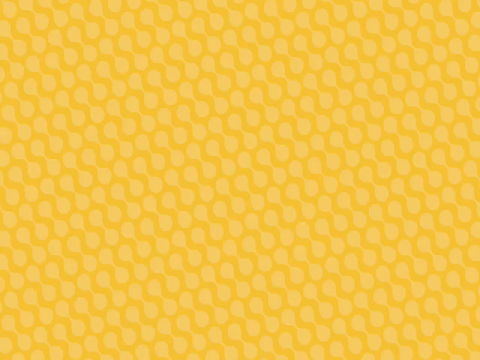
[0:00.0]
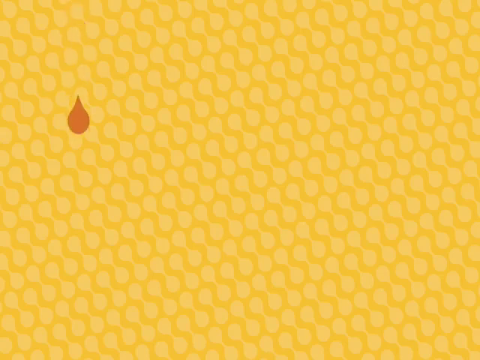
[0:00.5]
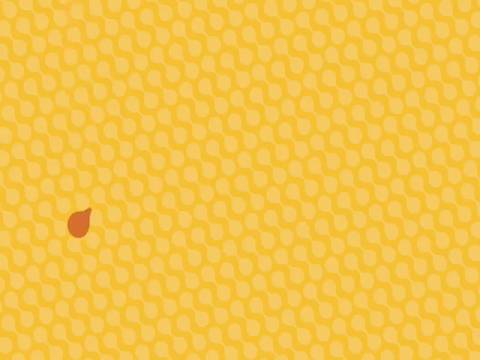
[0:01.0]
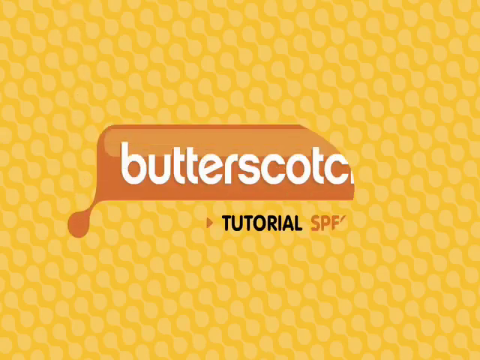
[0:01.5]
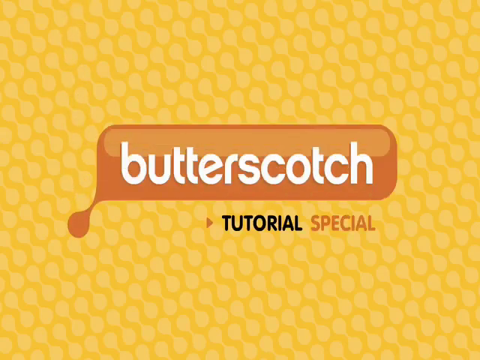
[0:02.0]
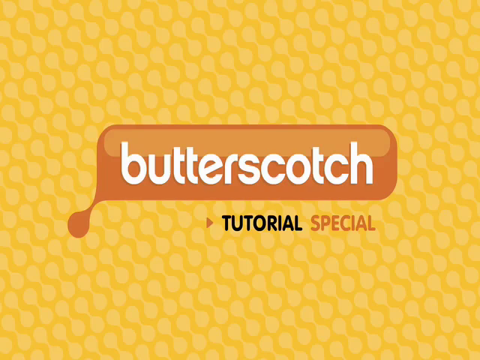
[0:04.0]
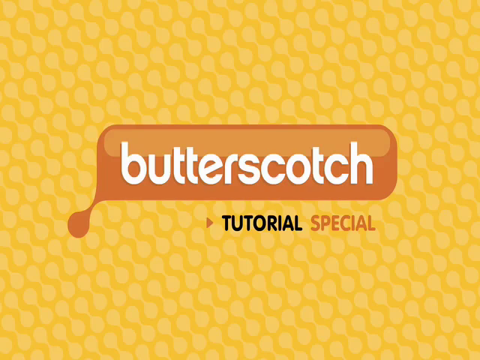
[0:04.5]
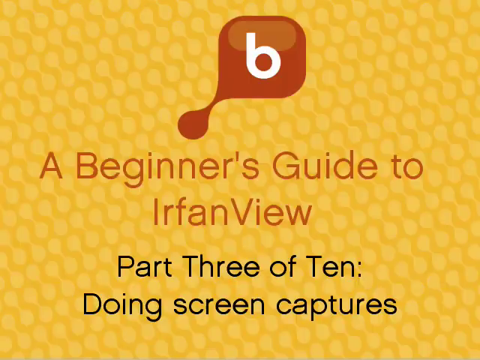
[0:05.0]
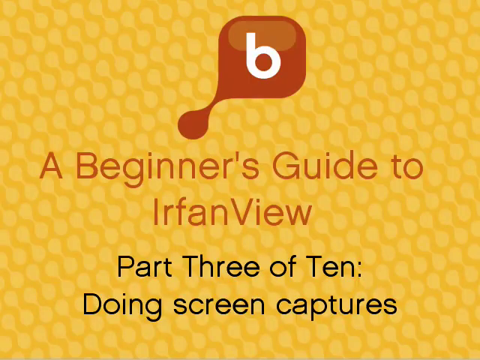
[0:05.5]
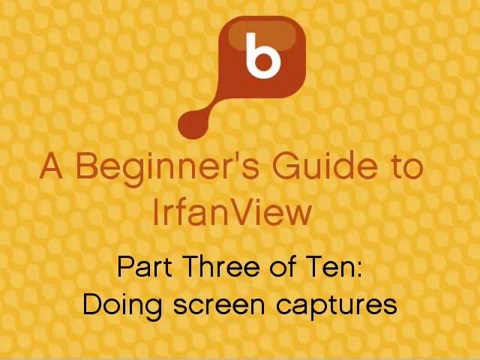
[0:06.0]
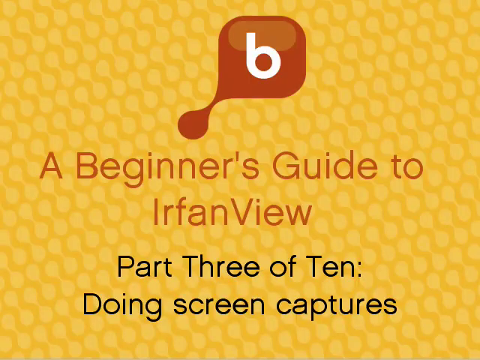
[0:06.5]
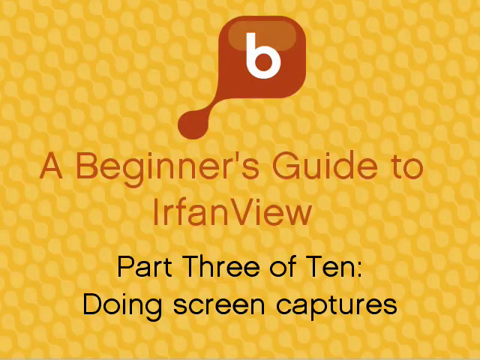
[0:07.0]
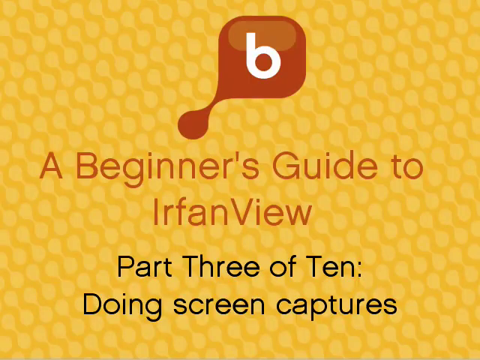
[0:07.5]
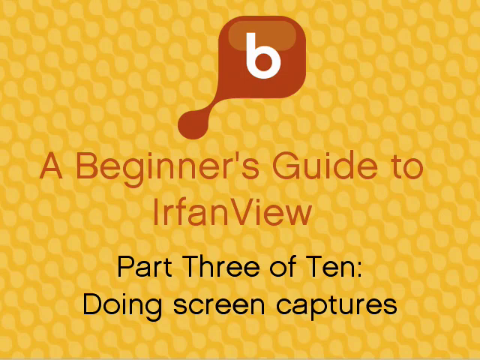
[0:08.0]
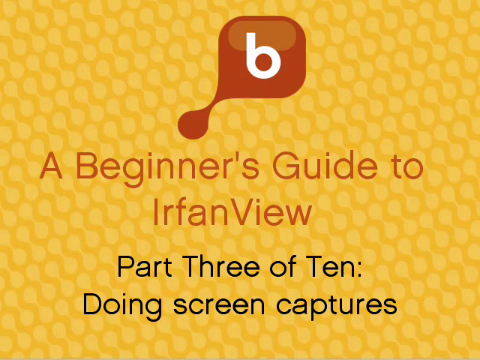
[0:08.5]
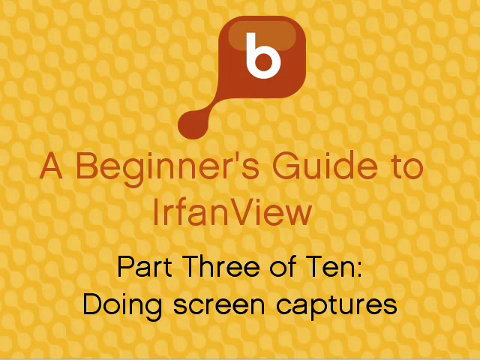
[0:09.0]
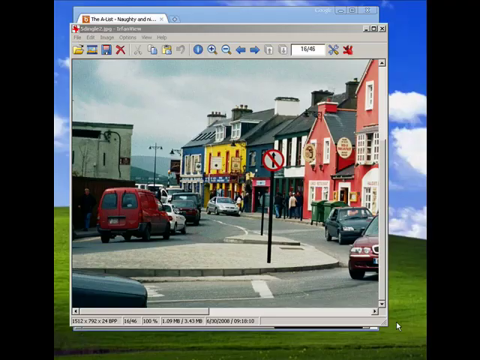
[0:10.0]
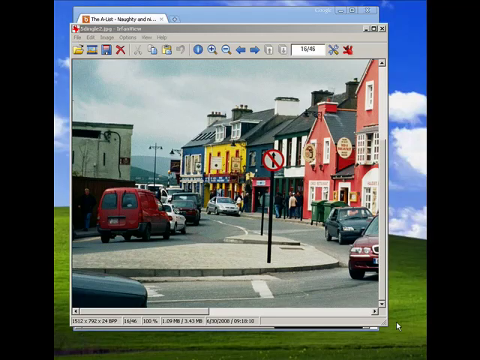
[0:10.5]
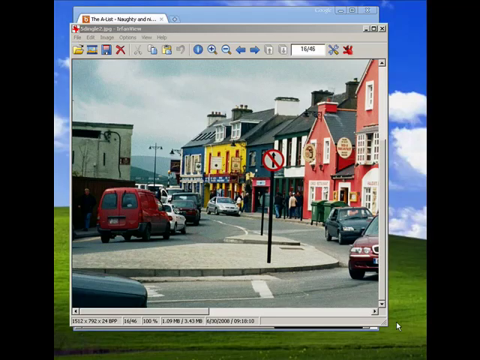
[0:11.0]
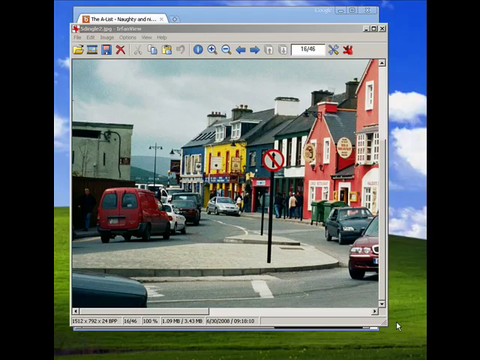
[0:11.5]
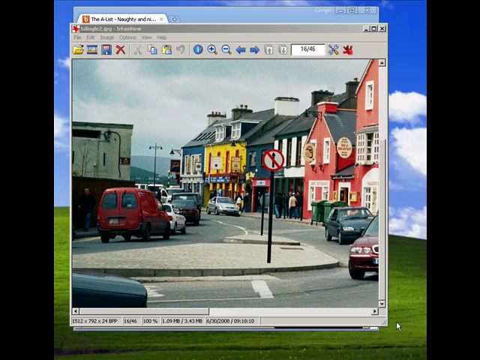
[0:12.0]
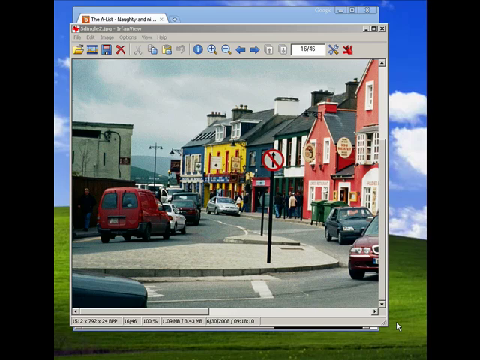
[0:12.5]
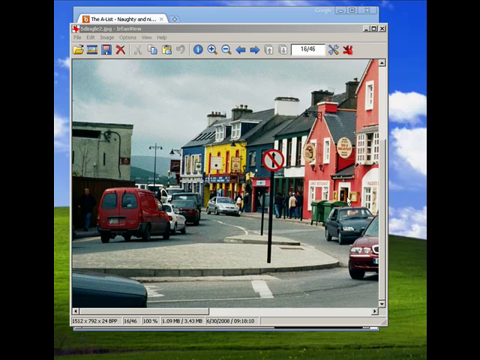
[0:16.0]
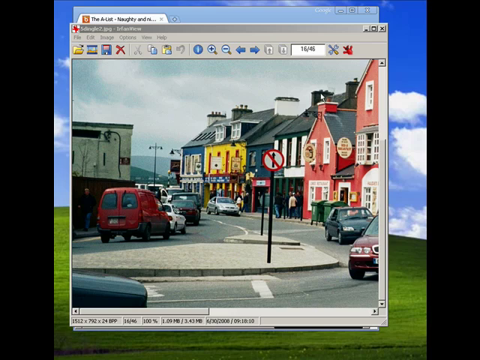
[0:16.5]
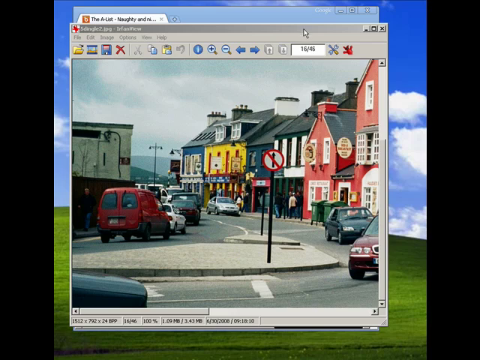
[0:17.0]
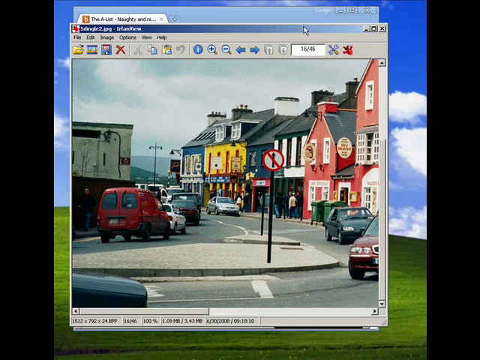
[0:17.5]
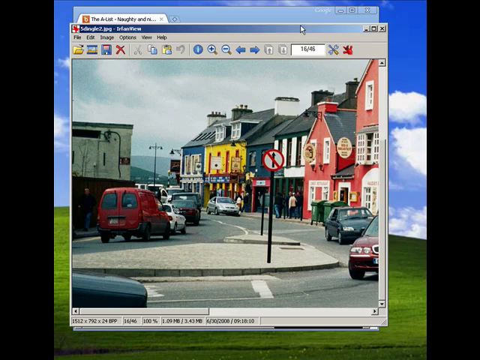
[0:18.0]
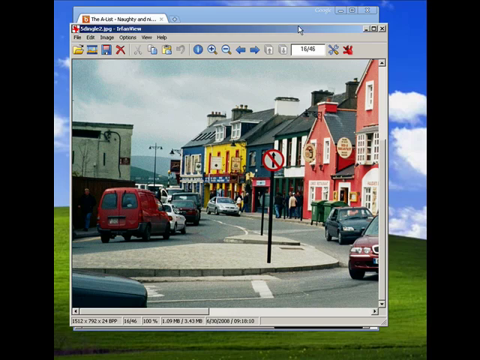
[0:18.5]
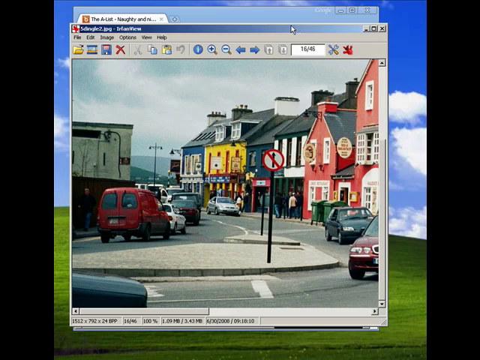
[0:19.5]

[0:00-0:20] The video opens with an introduction screen with a yellow honeycomb-like pattern in the background. A droplet appears on the screen and creates animated white text reading "Butterscotch tutorial special appears". The text then transitions to words that say "A beginner's guide to Irfan View", and underneath, in black text, "Part 3 of 10, doing screen captures". At the top is a dark brown logo with a white B in the middle. The scene then transitions to a desktop screen with a tab open showing an image of a street with some colorful houses in the background and some cars on an intersection; the scene looks European. The desktop background appears to be a hill with green landscape, blue skies and clouds, in high-contrast colors.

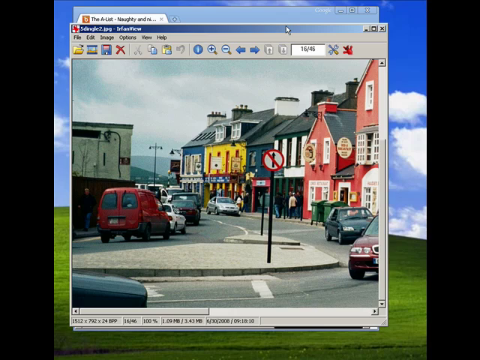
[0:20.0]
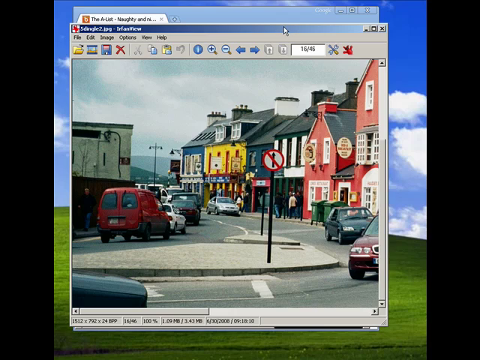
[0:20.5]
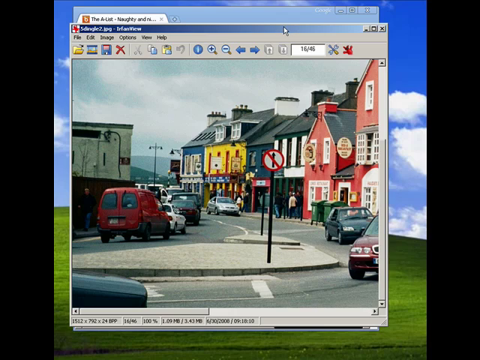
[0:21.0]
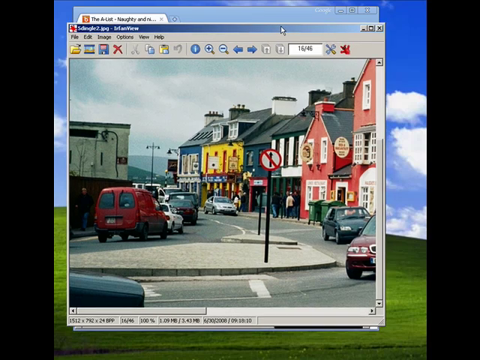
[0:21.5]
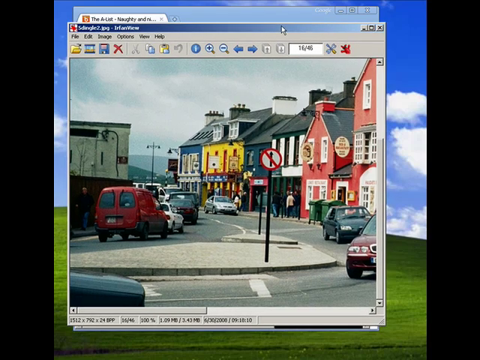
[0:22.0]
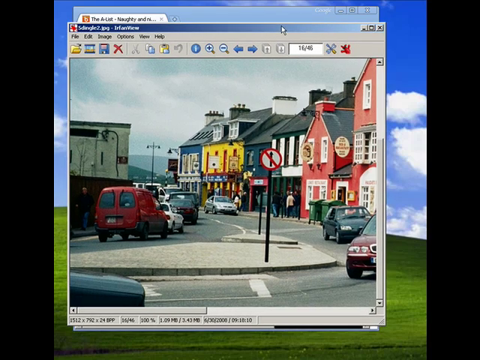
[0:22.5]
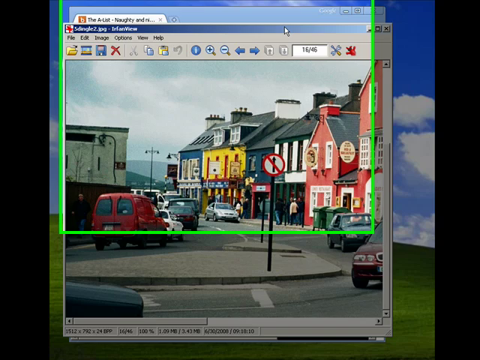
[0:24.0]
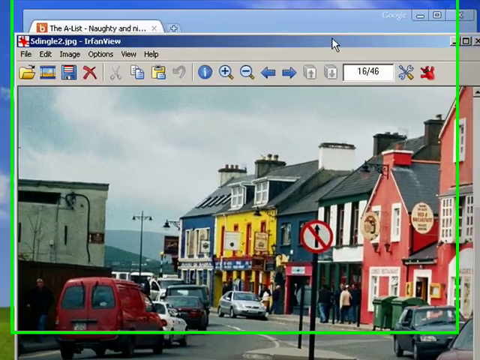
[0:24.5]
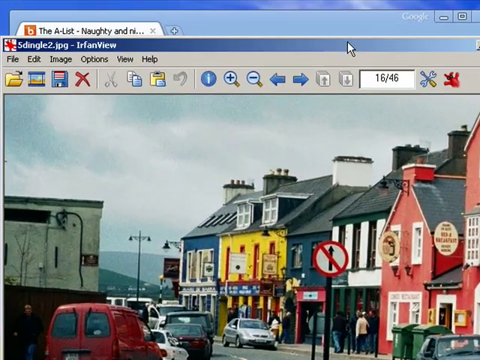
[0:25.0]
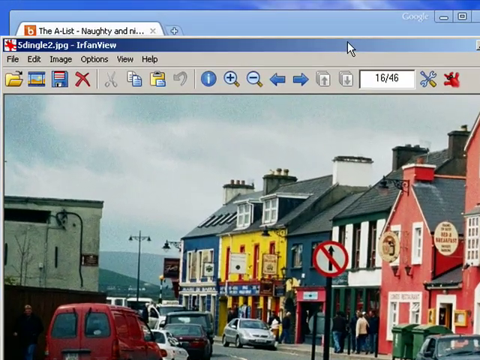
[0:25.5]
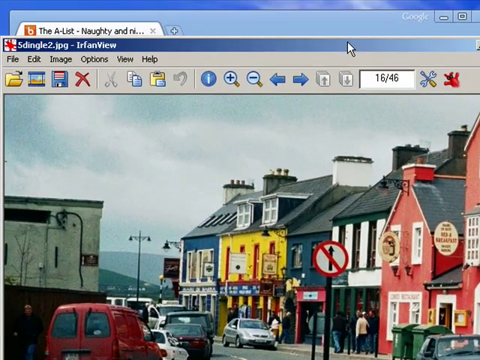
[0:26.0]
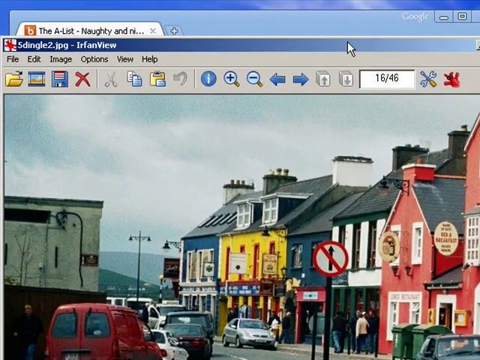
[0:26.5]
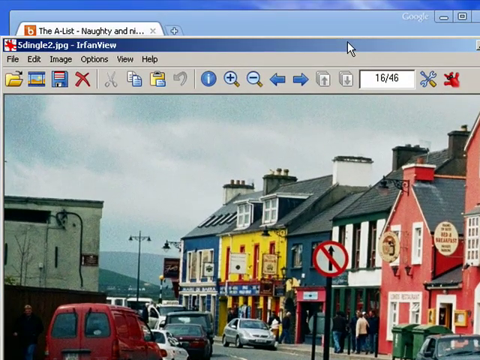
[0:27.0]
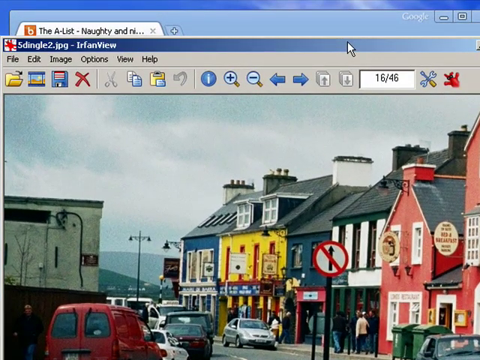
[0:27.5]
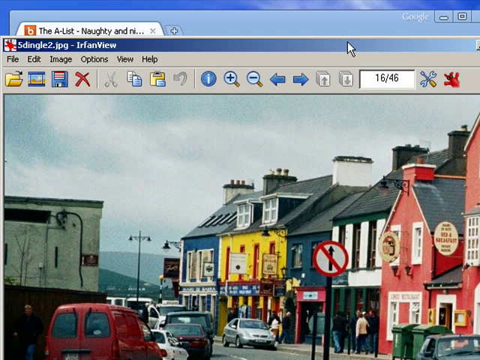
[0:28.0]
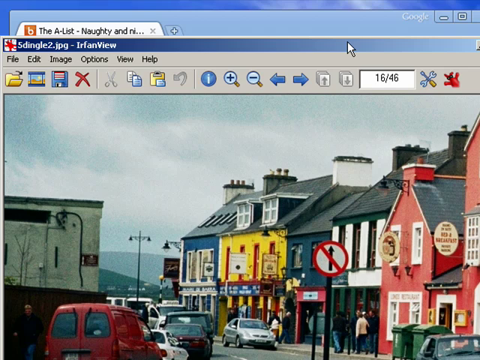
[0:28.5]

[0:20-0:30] The desktop still displays the image of the European street view. Several different cars are along the road at an intersection, which is fairly populated with cars. In the background are several colorful houses in blue, yellow, red and white, and there are also some hills. A mouse cursor is at the top of the screen. The video then zooms into the top portion of the screen, and the tab becomes legible, reading "the A-list, naughty and nice". There are some tool icons at the top of the image.